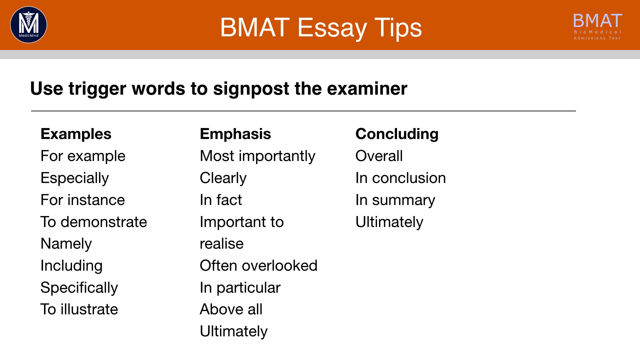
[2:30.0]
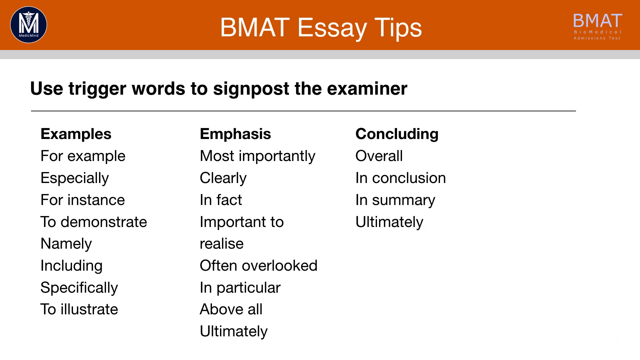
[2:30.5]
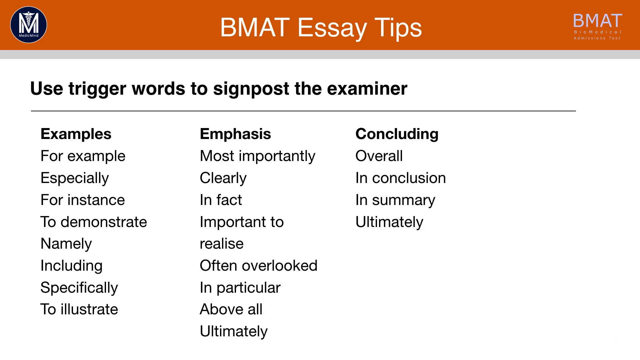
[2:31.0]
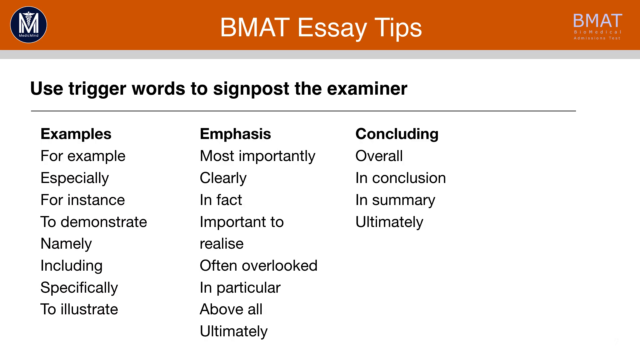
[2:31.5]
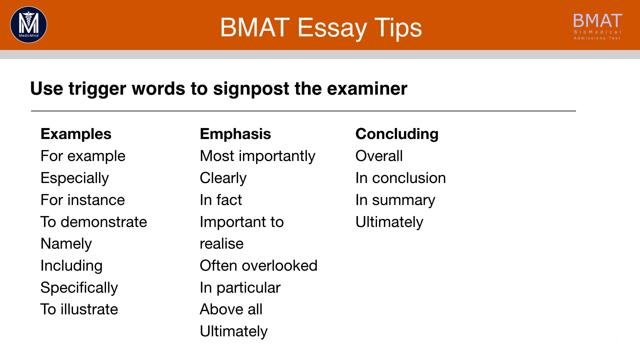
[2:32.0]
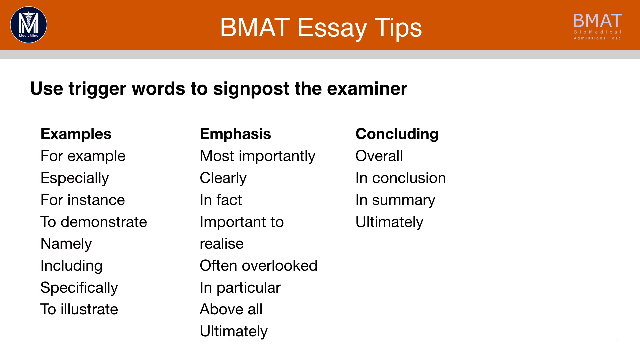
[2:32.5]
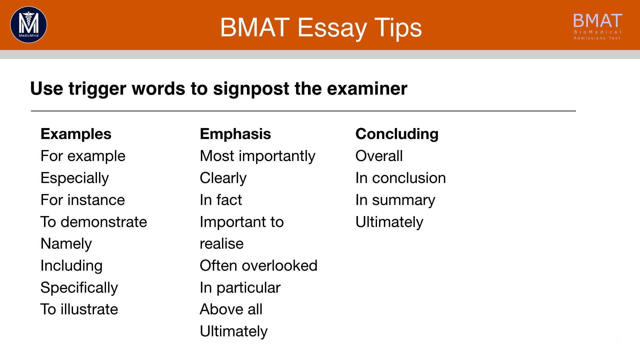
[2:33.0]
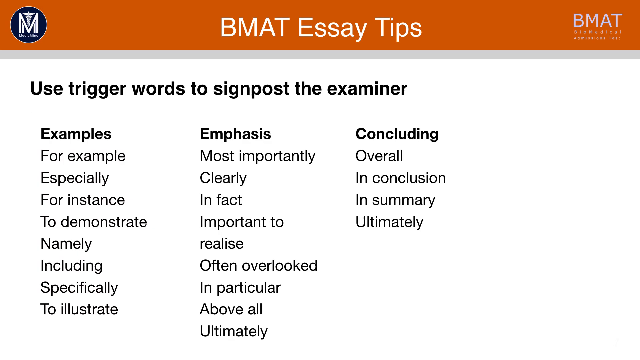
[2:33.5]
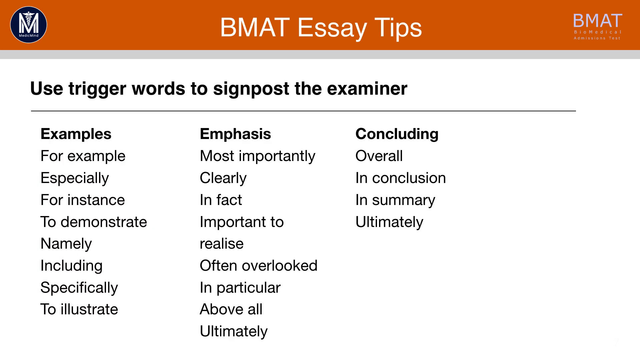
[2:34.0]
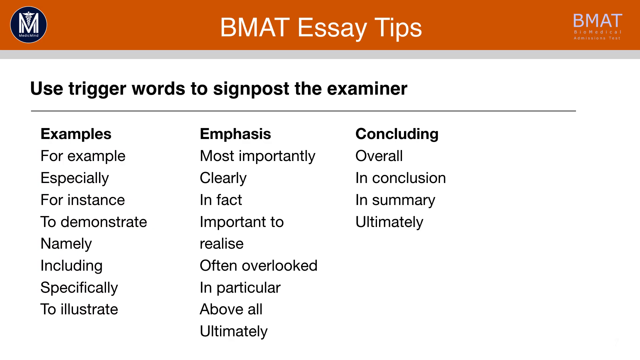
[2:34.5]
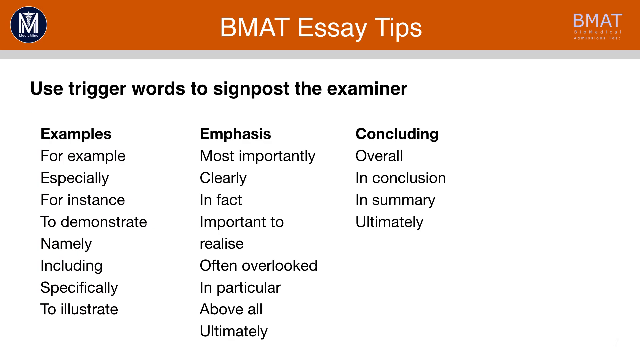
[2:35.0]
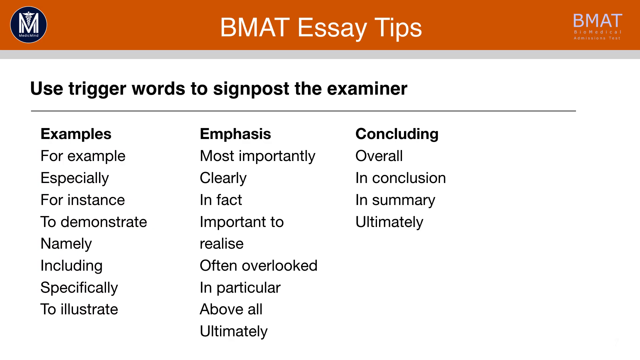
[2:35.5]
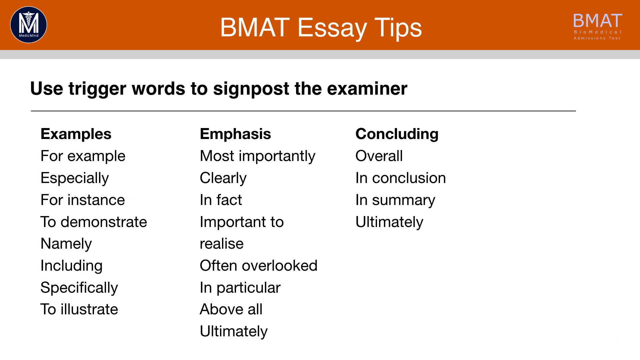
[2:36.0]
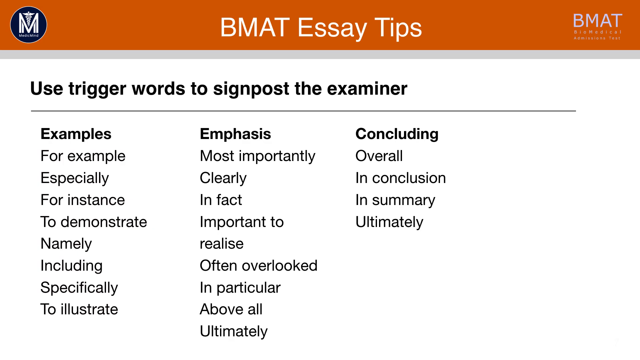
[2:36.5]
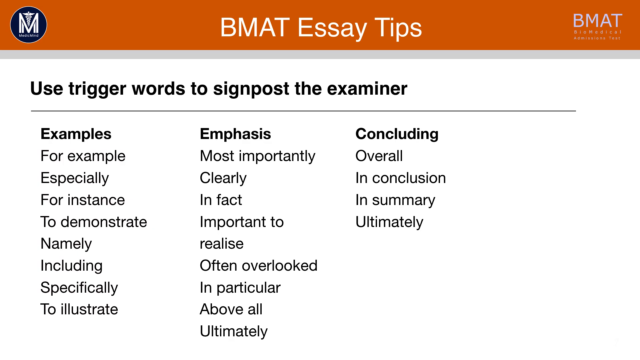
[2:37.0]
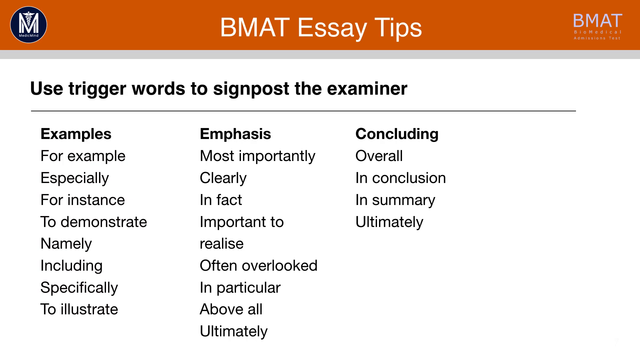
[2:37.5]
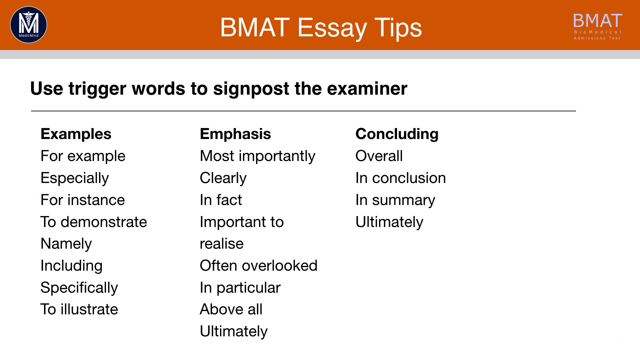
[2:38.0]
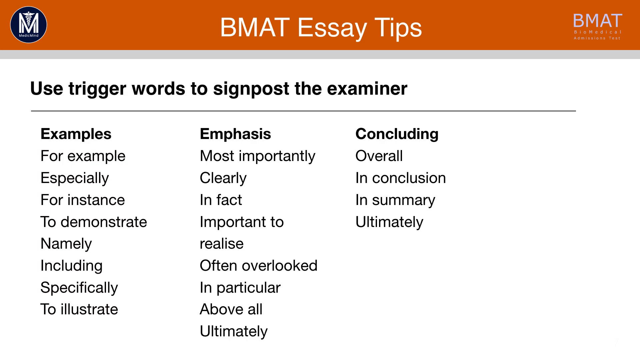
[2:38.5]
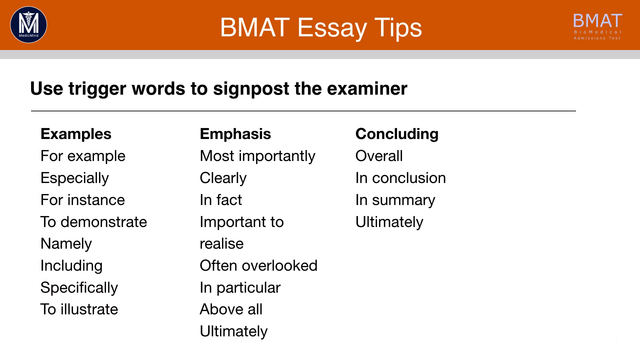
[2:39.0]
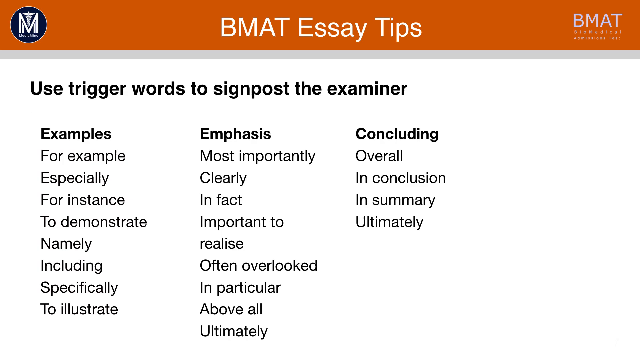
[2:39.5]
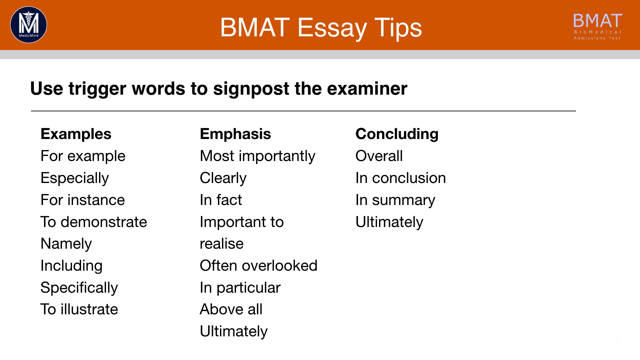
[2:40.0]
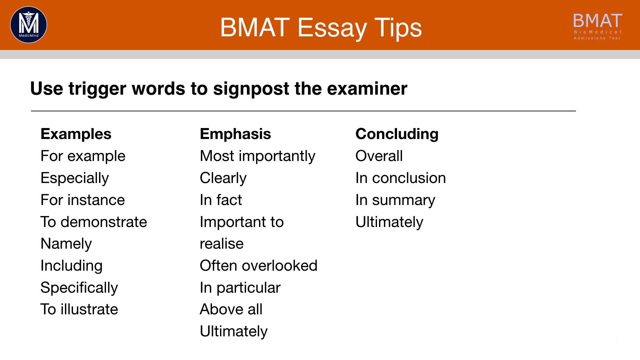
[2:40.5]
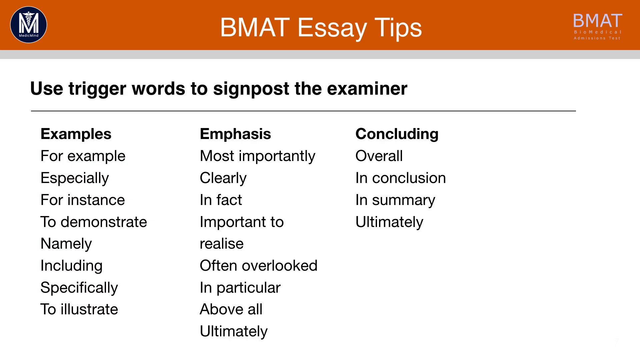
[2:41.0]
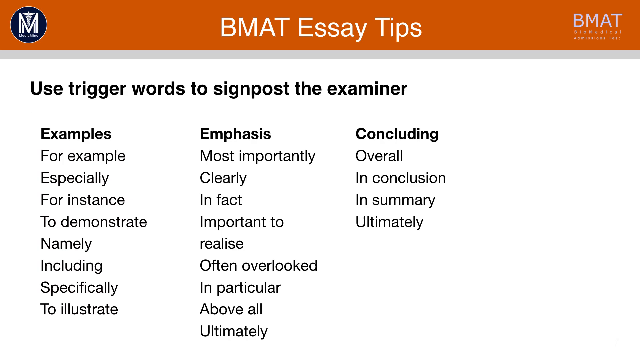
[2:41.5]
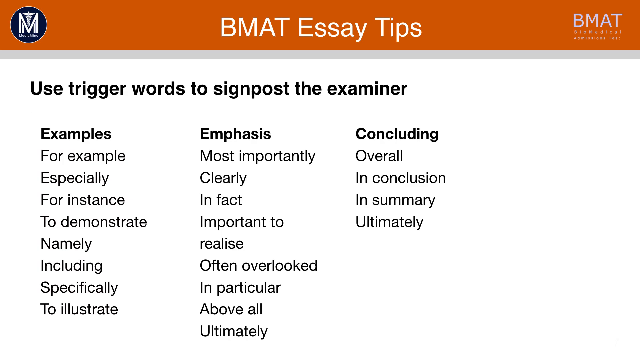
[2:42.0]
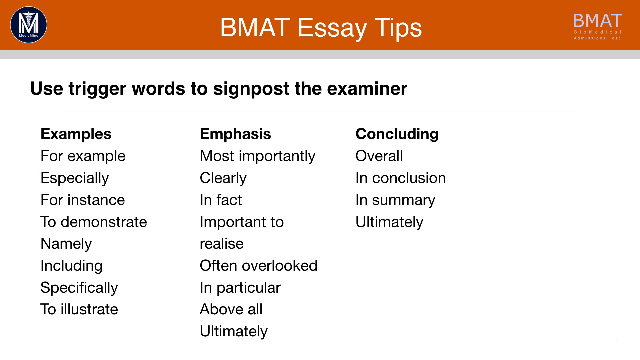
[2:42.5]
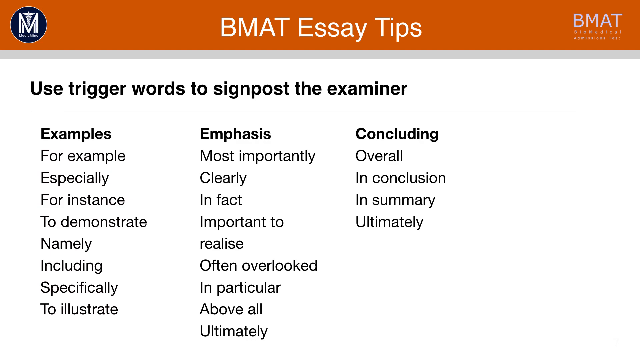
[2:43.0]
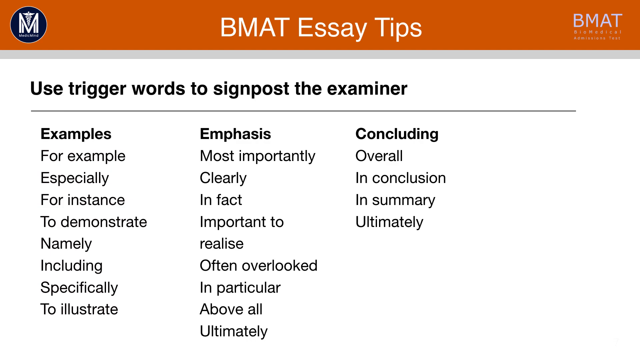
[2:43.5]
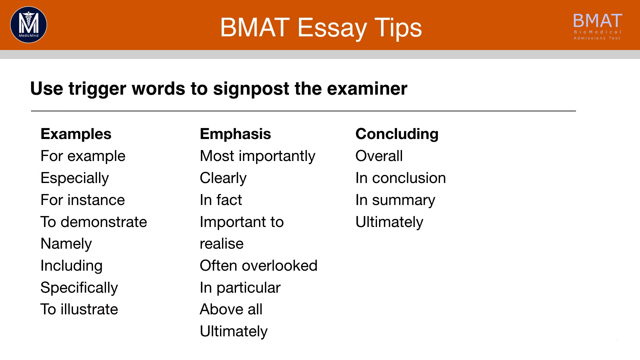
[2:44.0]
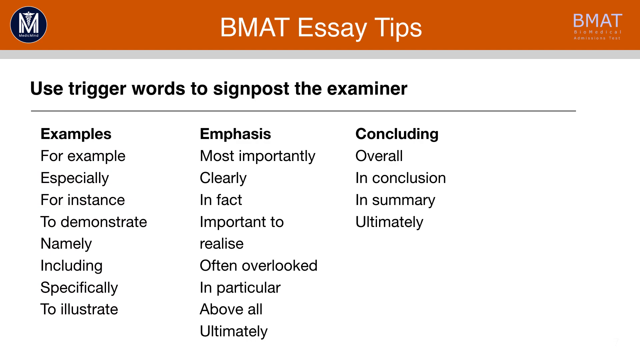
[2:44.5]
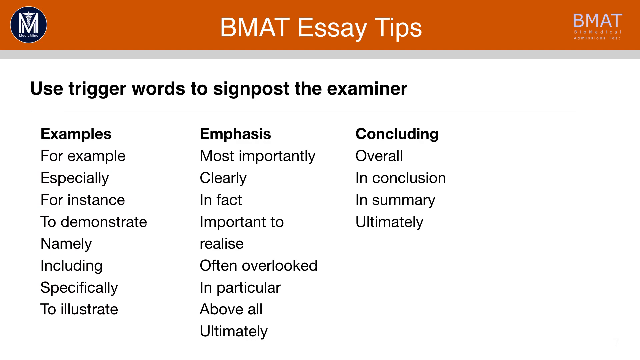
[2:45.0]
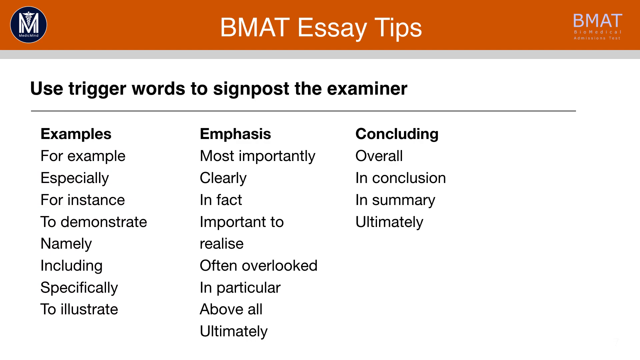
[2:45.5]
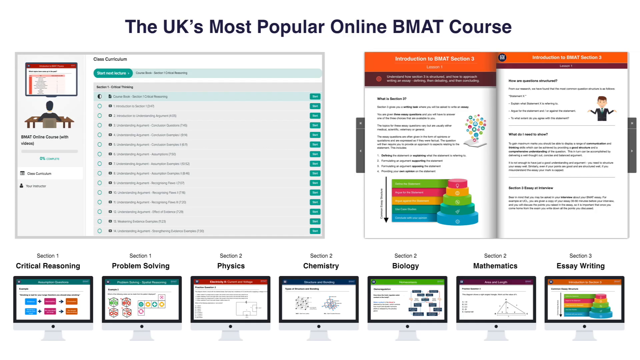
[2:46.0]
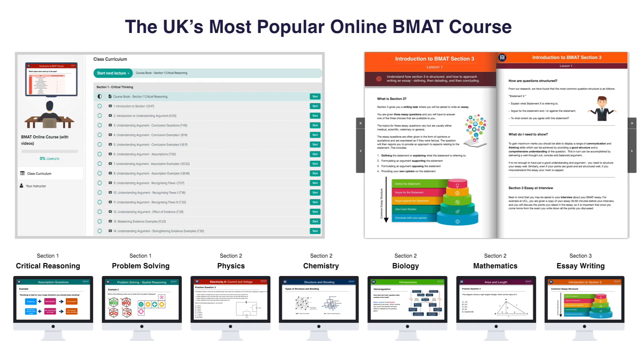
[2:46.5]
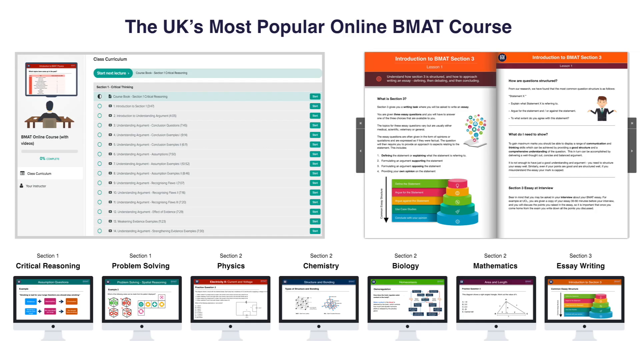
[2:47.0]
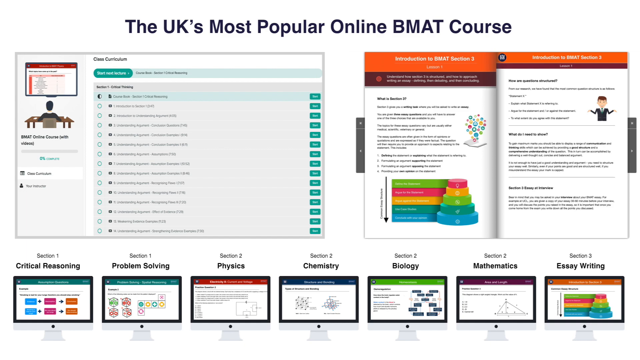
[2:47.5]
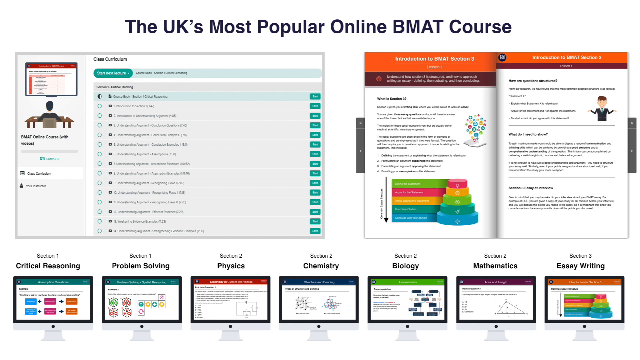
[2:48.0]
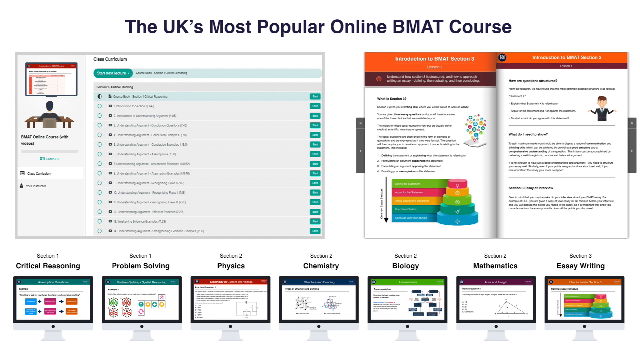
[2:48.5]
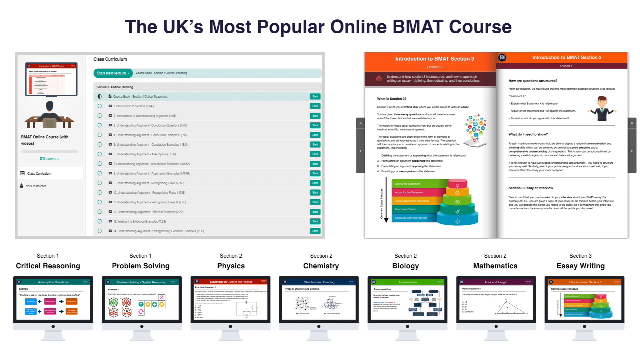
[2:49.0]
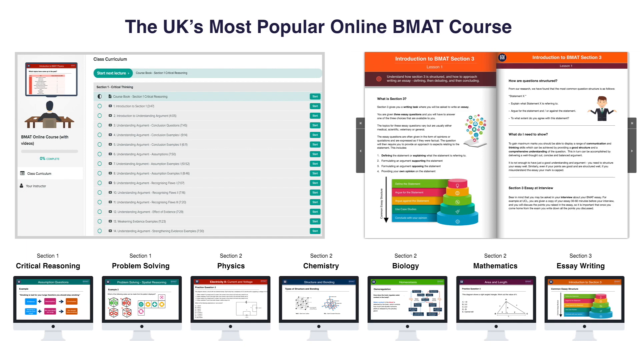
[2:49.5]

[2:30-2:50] The page with the orange overlay, the blue and white logo at the top left and the BMAT logo at the top right shows the trigger words to signpost the examiner, with examples, emphasis and concluding as the three words at the top and examples below. This remains on screen. Toward the end, it transitions to a new page reading "the UK's most popular online BMAT course". It includes two images of different pages: one on the left with lots of different clickable options, and one on the right that looks like an image from a book. Below are different topics in different sections, including critical reasoning, problem solving, physics, chemistry, biology, mathematics and essay writing. The page appears to be a coursework example showing different options.